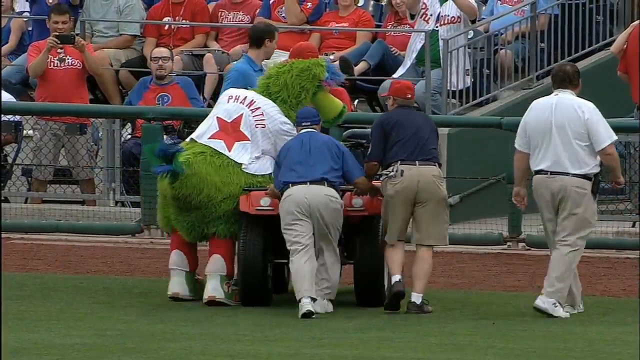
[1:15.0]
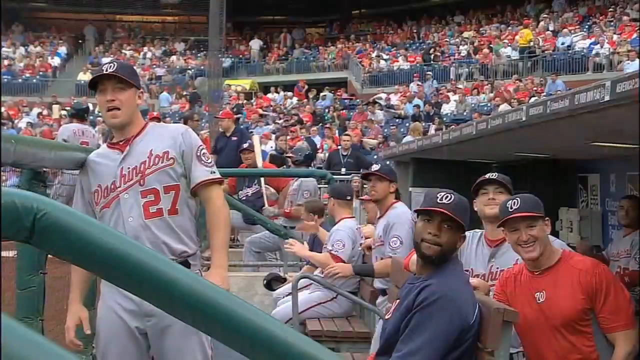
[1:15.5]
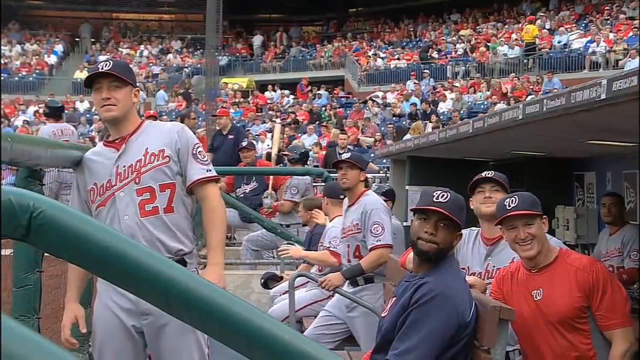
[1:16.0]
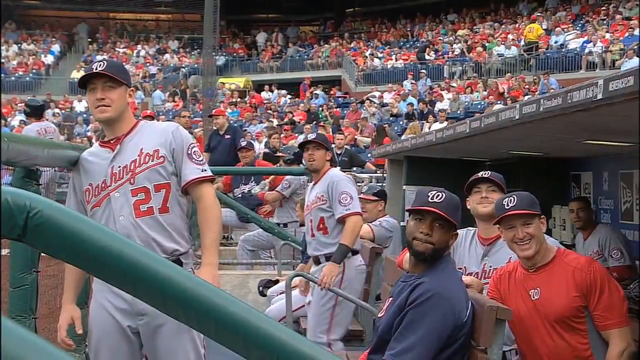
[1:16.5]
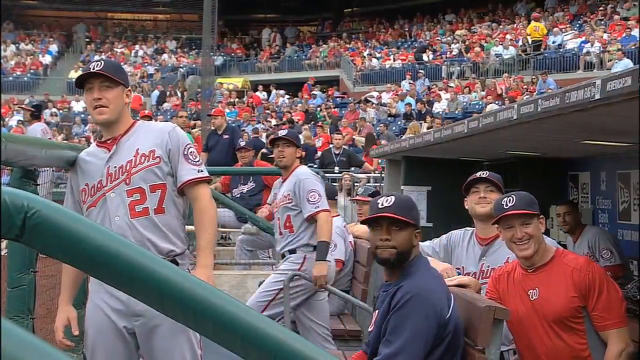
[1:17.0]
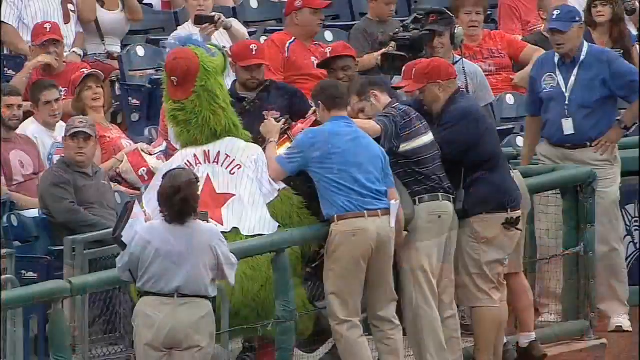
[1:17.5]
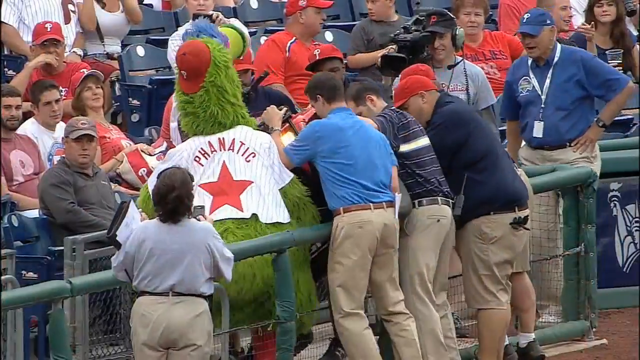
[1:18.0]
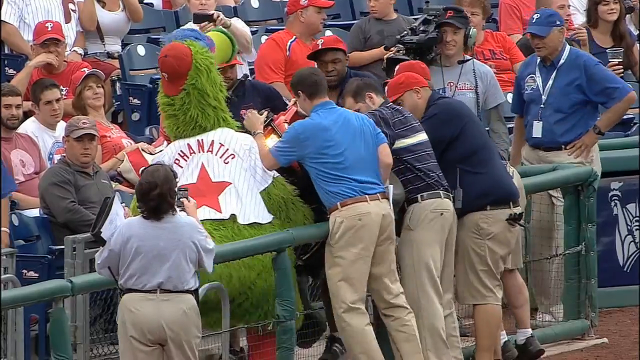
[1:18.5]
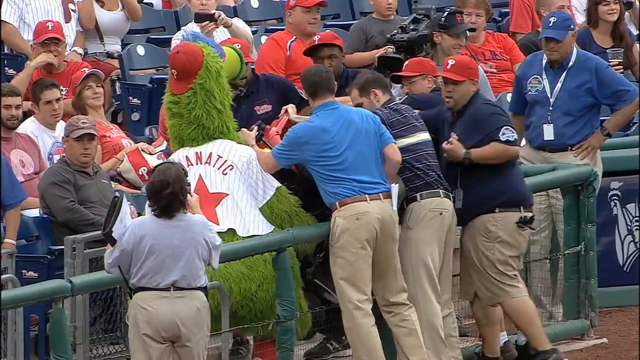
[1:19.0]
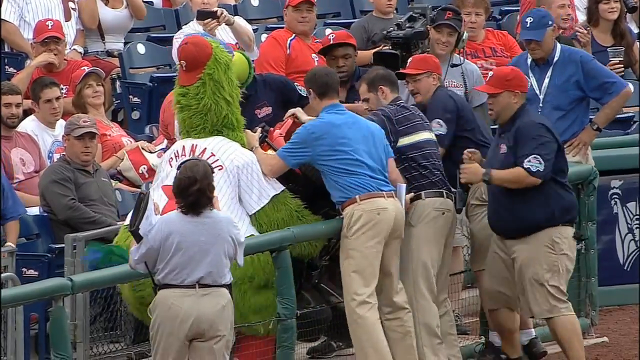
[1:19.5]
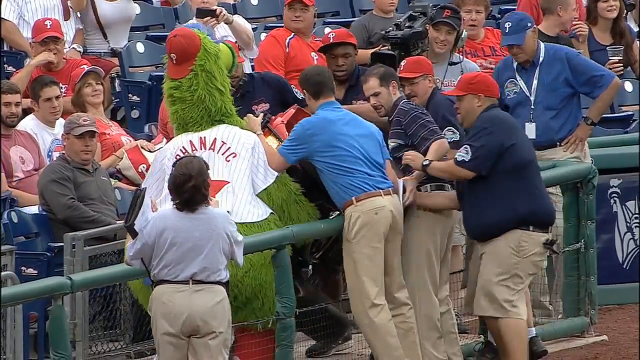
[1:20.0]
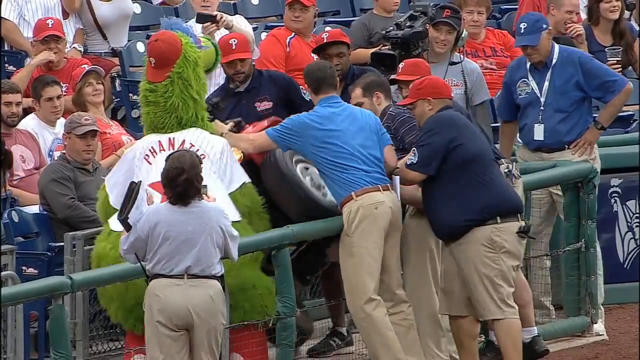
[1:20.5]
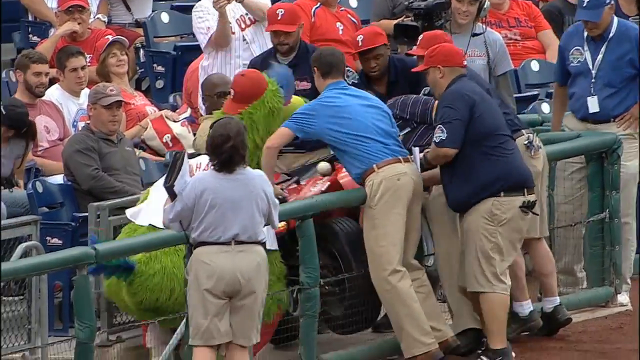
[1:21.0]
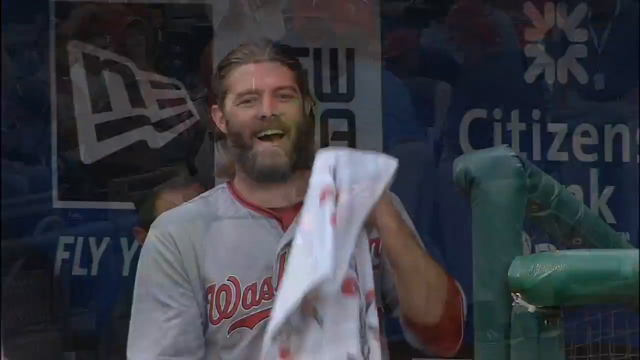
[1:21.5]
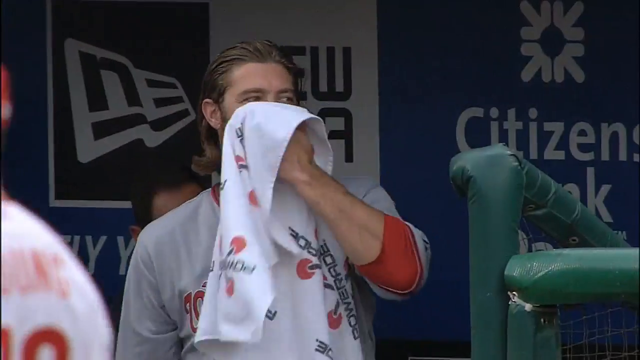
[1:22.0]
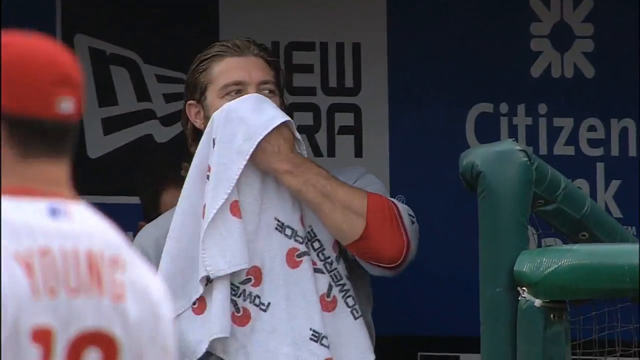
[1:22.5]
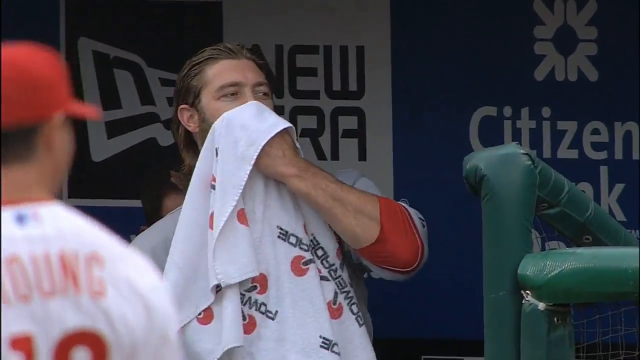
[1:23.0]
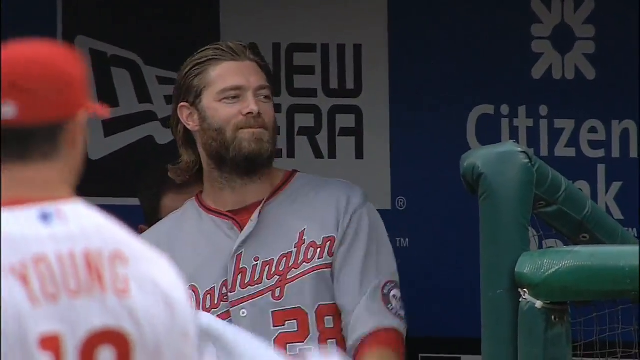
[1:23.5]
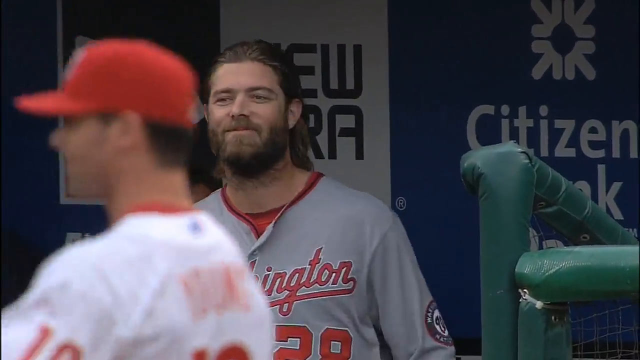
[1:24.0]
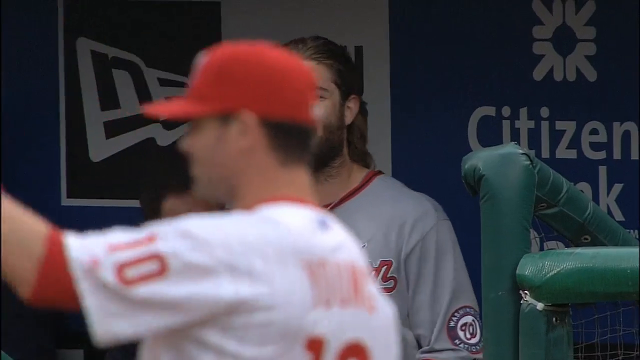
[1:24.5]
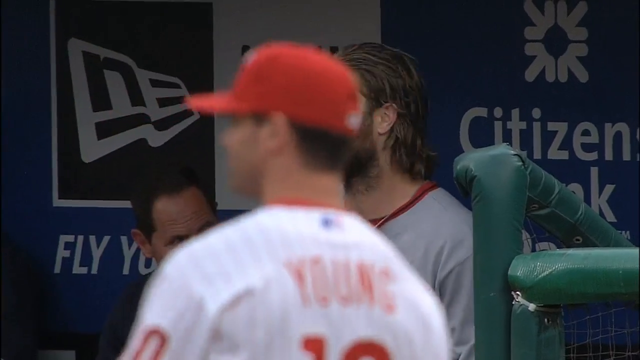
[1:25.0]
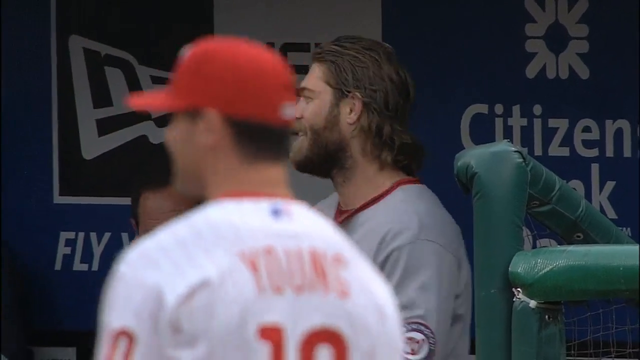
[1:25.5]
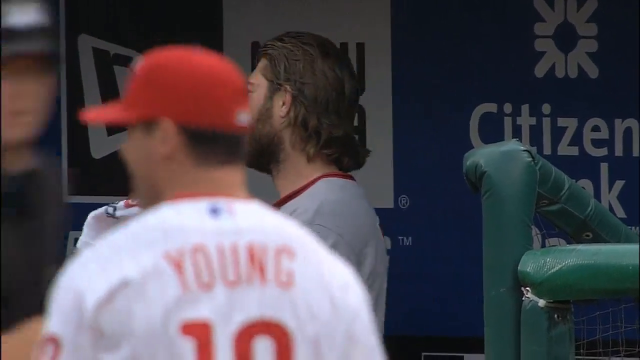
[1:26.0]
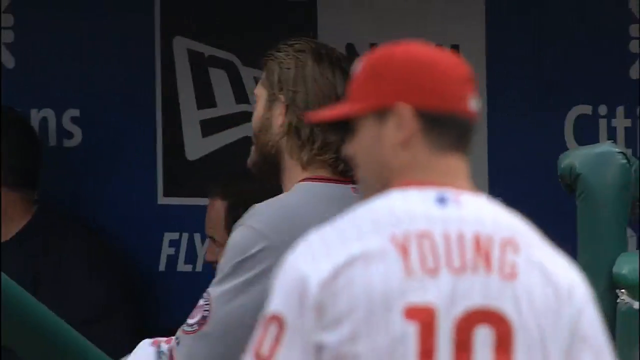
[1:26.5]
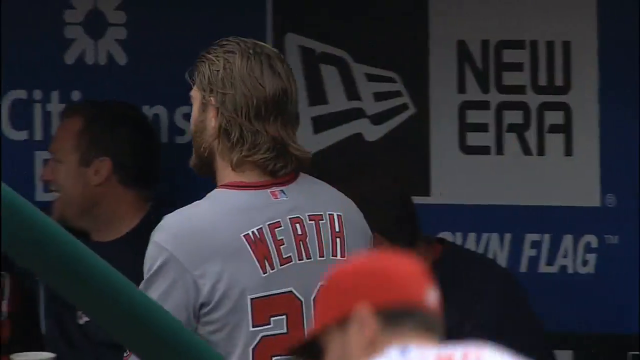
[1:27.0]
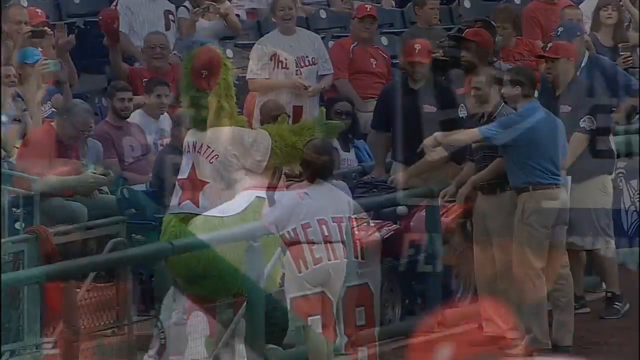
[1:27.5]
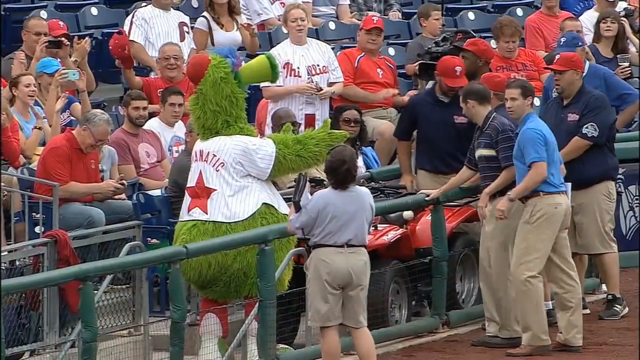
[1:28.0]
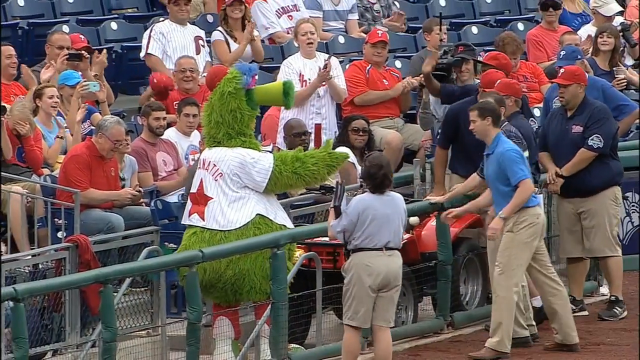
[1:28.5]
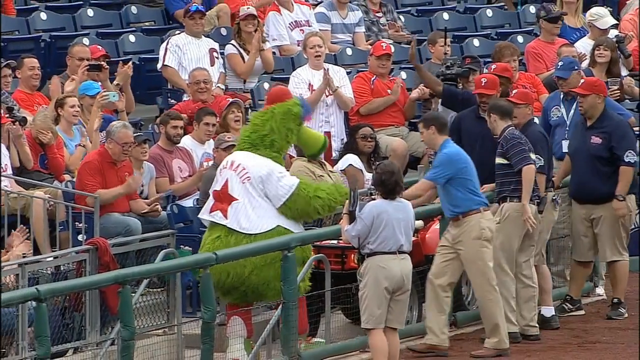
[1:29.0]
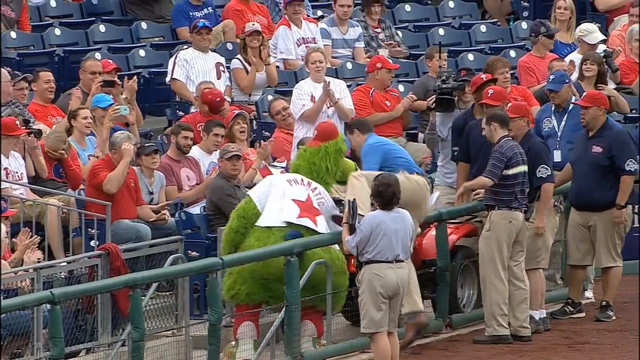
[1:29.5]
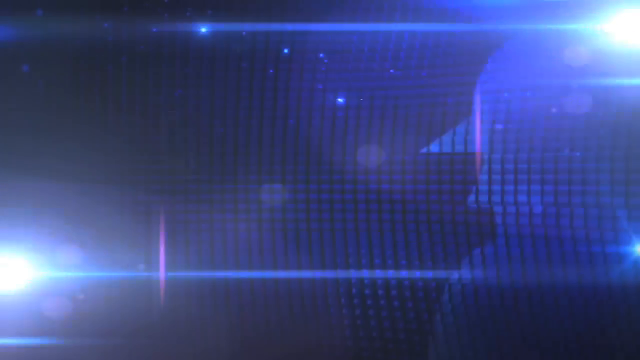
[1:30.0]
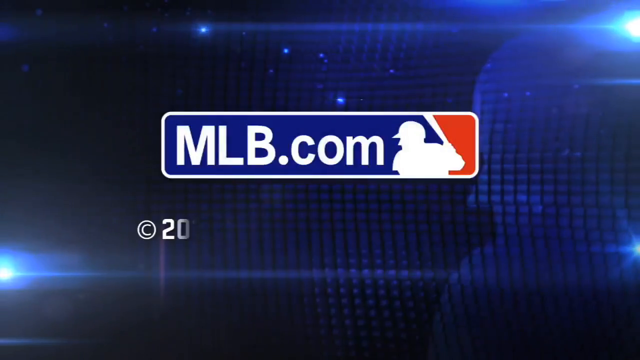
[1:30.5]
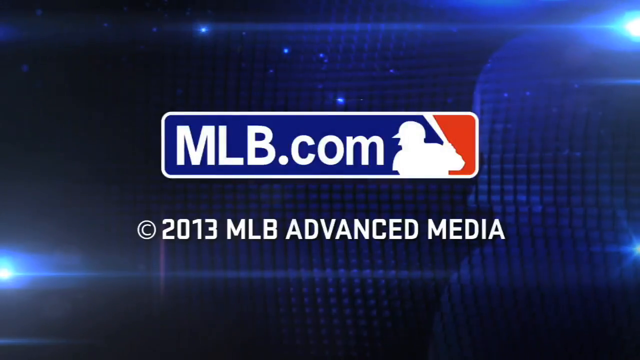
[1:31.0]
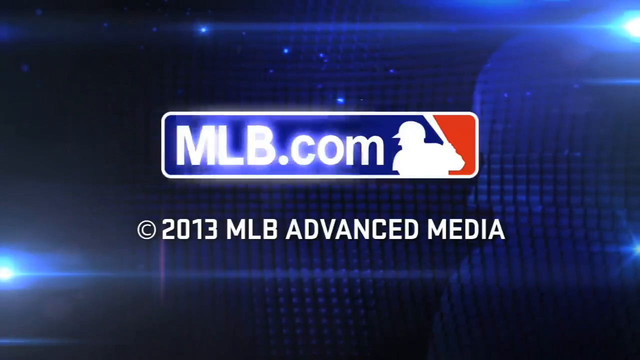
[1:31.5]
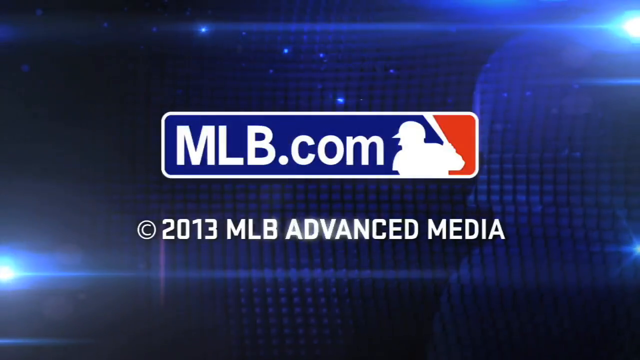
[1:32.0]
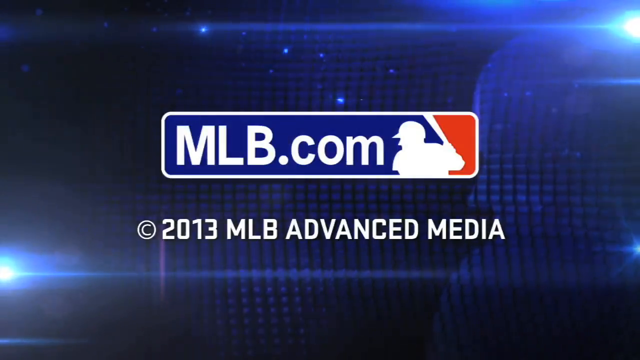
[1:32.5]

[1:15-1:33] The mascot and the staff members finally get the four-wheeler off the field; several staff members carry it over a gate, and it apparently reaches the concrete. The Washington Nationals in the dugout watch the mascot and staff push the ATV off and are sort of laughing about it. Many fans start to clap. At the end, "MLB.com" appears, with "subscribe" in the bottom right corner and a 2013 copyright at the bottom of the screen.